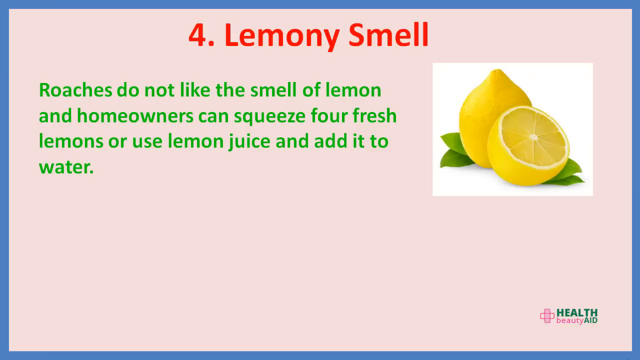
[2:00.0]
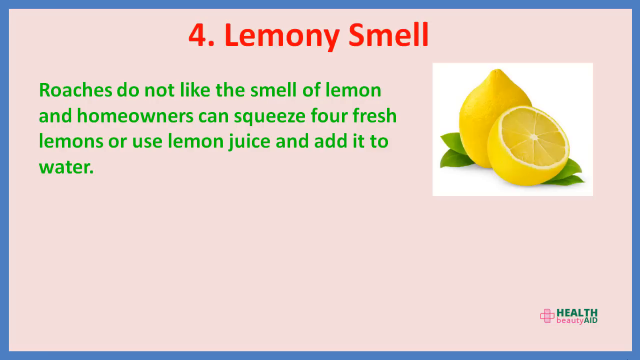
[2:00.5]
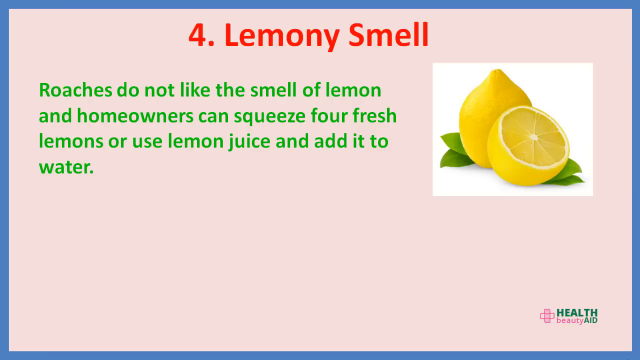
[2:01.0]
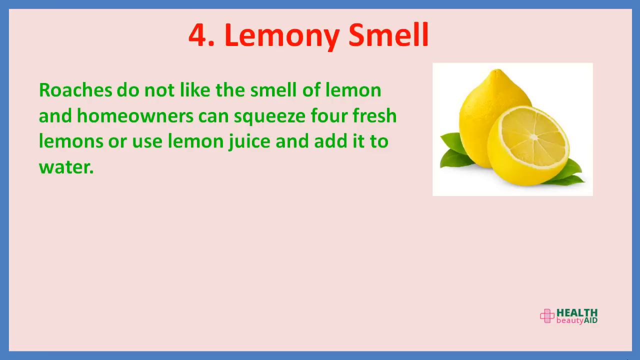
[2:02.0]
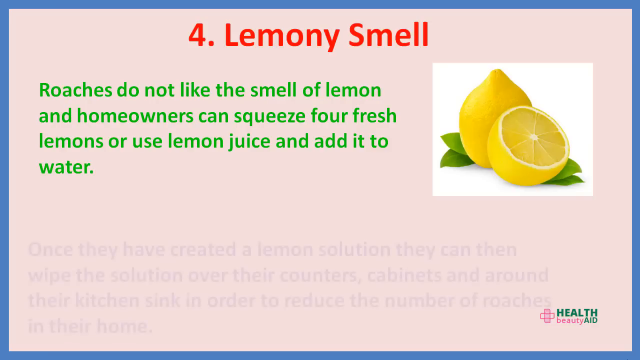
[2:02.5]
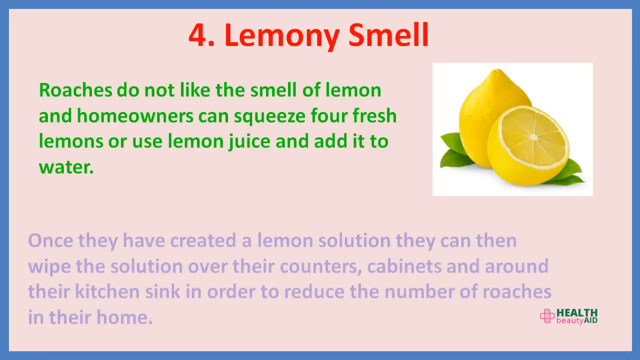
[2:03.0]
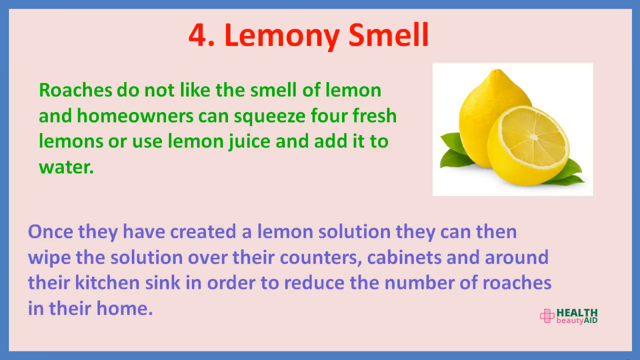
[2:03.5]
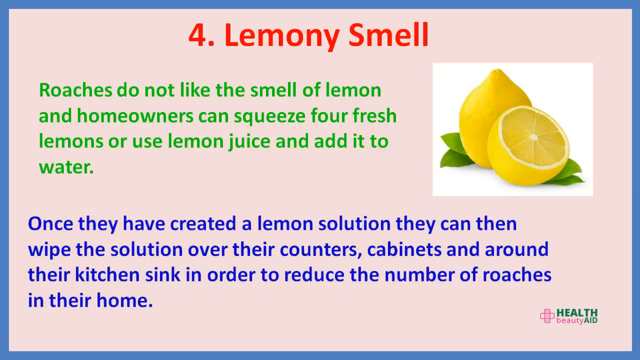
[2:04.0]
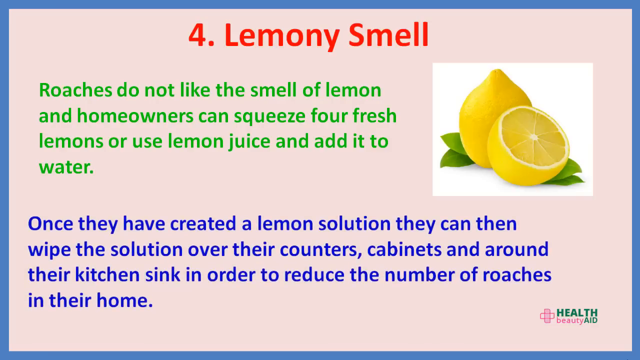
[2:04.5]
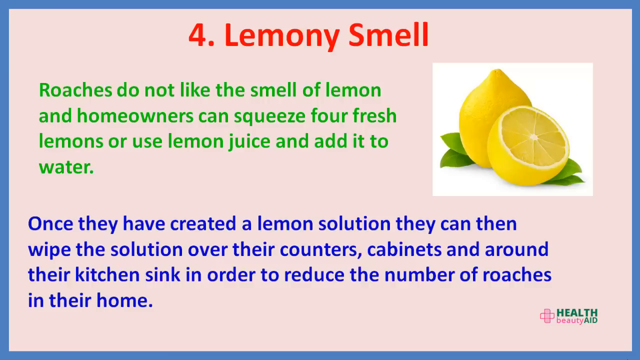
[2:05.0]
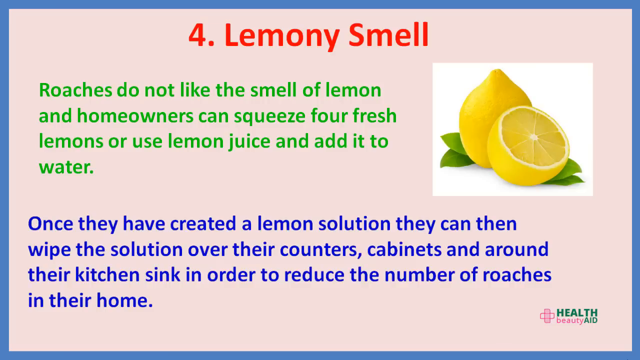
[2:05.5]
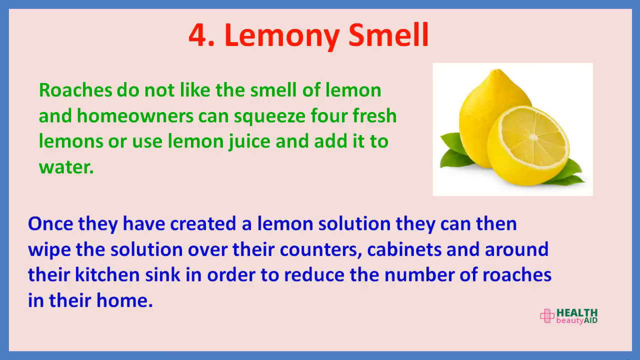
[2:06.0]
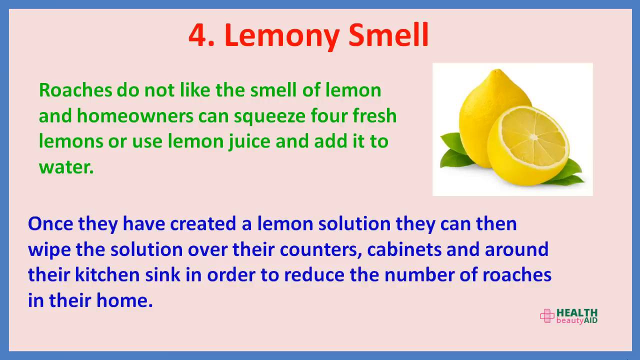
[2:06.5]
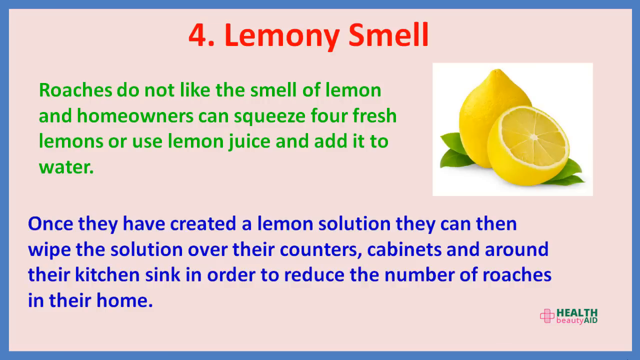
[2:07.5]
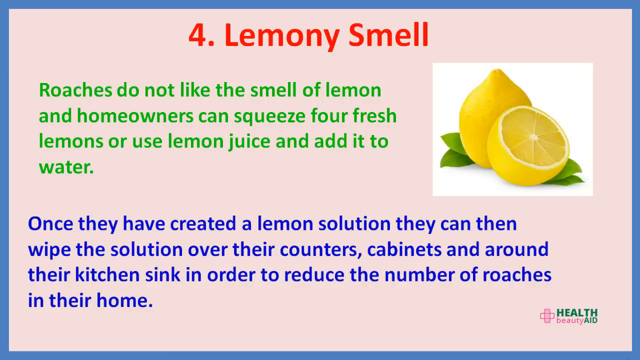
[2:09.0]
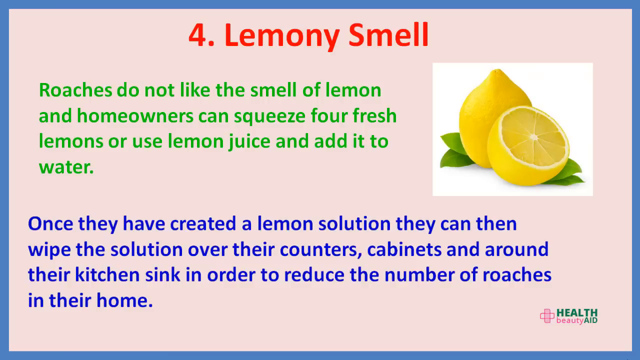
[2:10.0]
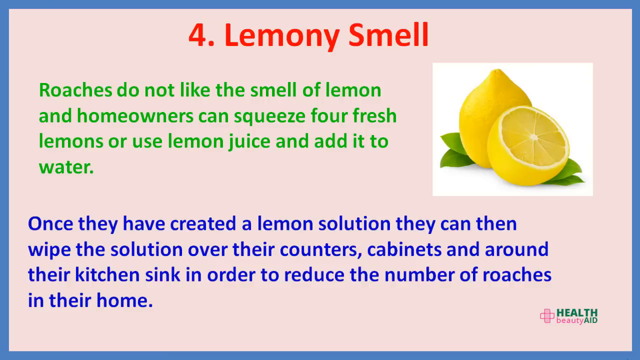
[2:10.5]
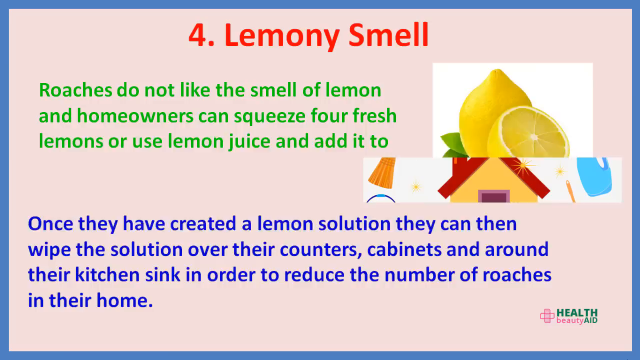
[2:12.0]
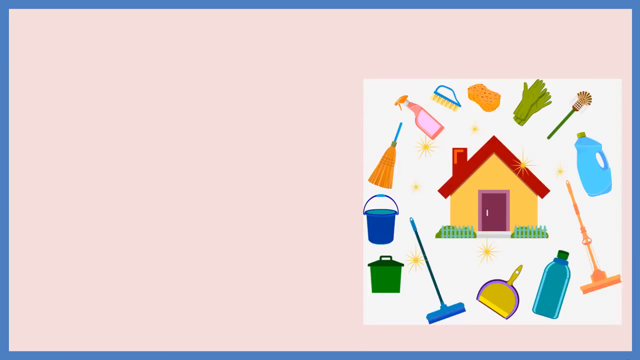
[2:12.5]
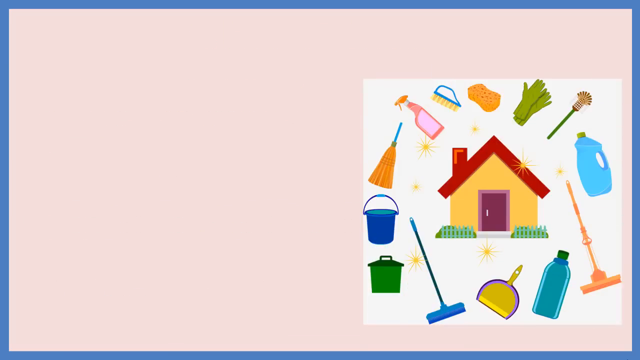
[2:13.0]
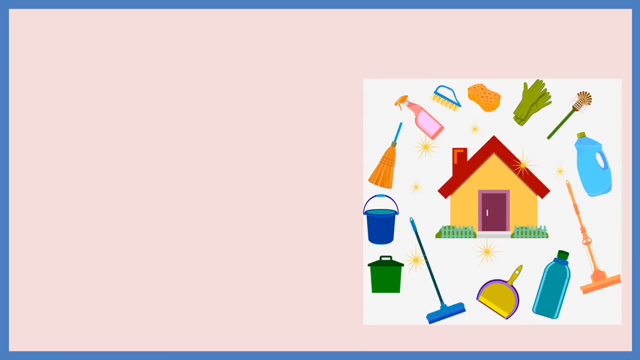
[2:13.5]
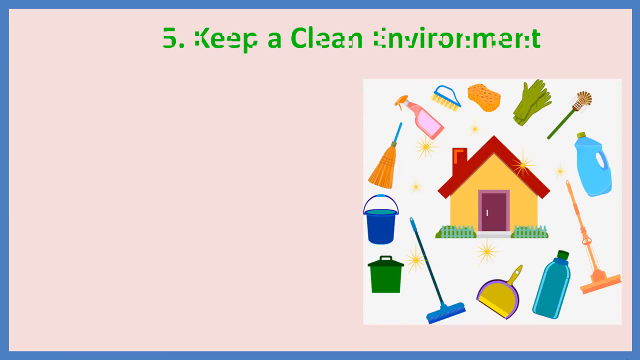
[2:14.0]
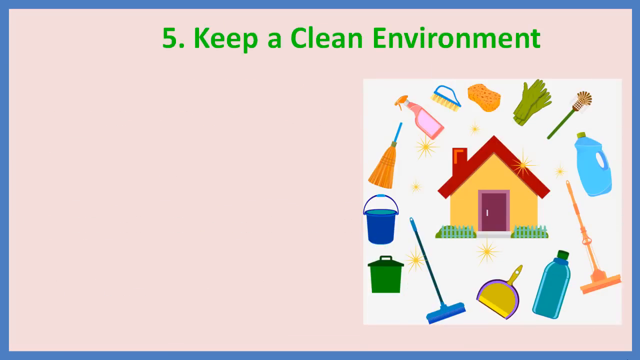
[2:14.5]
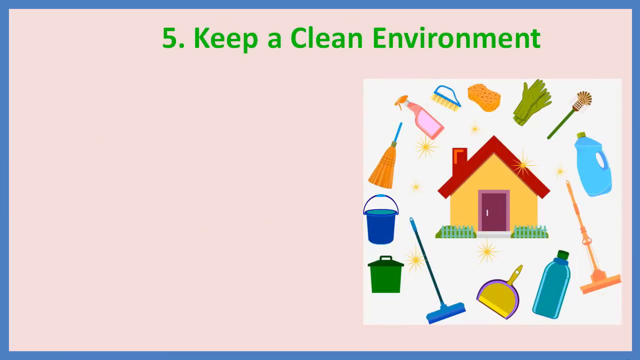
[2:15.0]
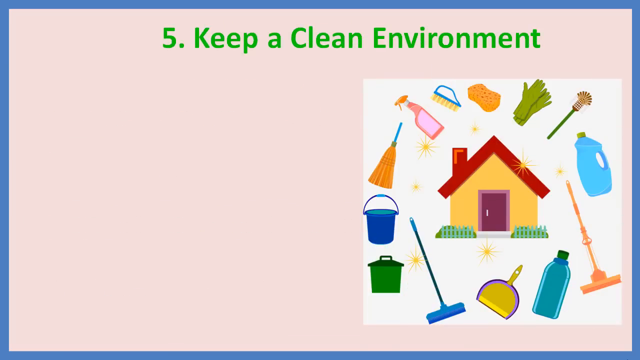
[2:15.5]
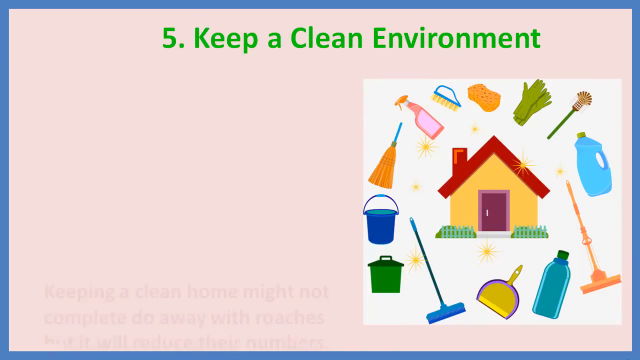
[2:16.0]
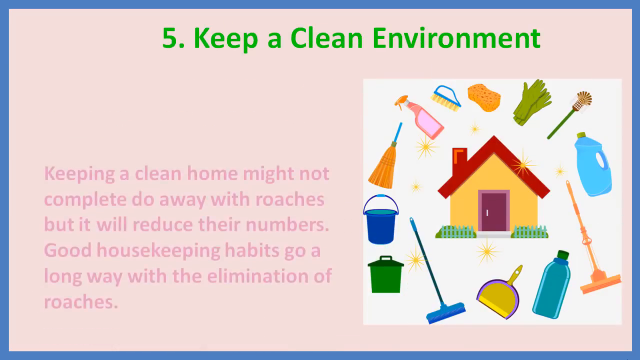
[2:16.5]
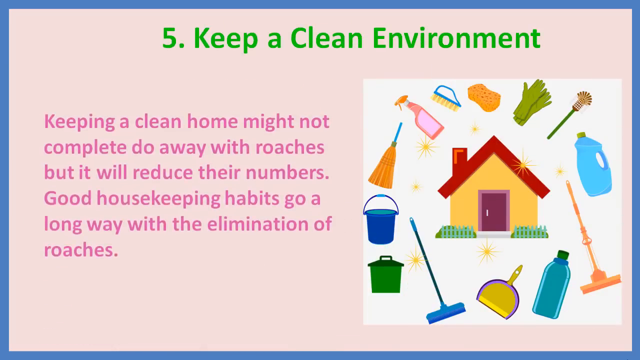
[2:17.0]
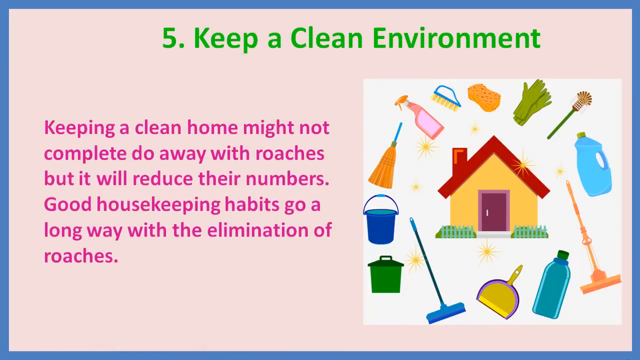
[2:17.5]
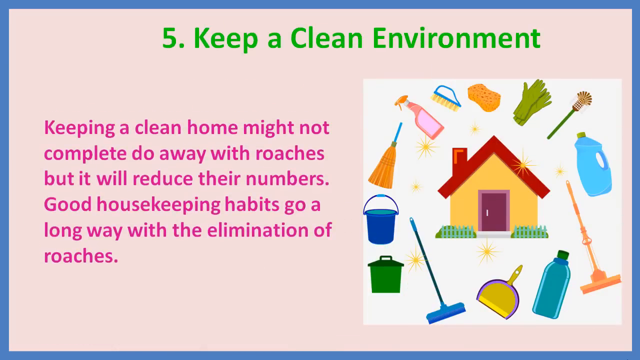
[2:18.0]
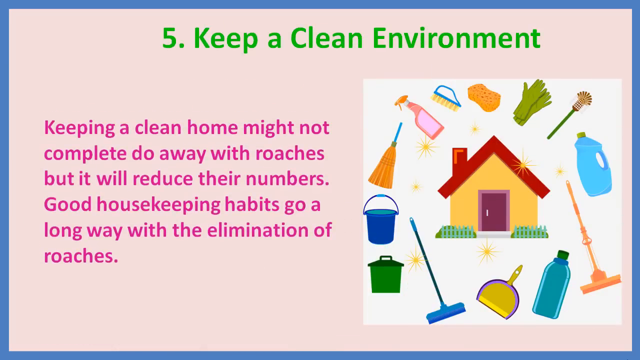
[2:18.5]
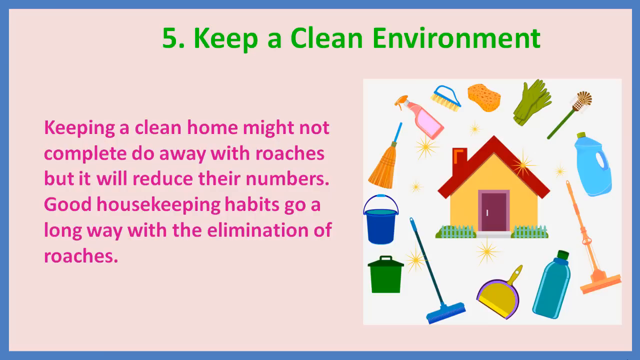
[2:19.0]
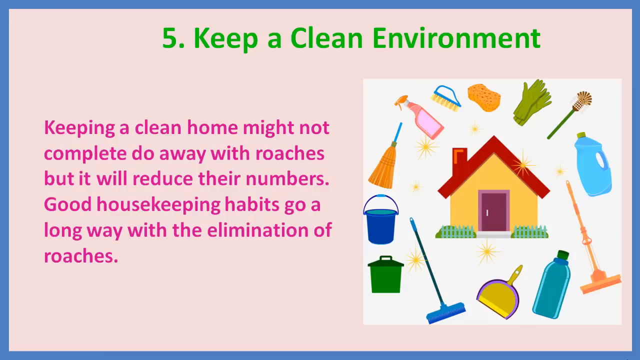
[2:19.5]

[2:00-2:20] The slide has a blue frame and a light pink background. Orange letters at the top read "four lemony smell." Green lettering below says "roaches do not like the smell of lemon and homeowners can squeeze four fresh lemons or use lemon juice and add it to water." Blue lettering below that says "once they've created a lemon solution they can then wipe the solution over their counters cabinets and around the kitchen sink in order to reduce the number of roaches in their home." At the top right is a white square with two lemons in the center: a whole one in the back with a narrow tip, and one cut in half more in the center, with a round white rim and a white center. Two green leaves are underneath the lemons at the bottom left and right. Green lettering at the bottom right says "health," pink below says "beauty," green to the right says "aid," and to the far left of these words is a pink cross like a band-aid.